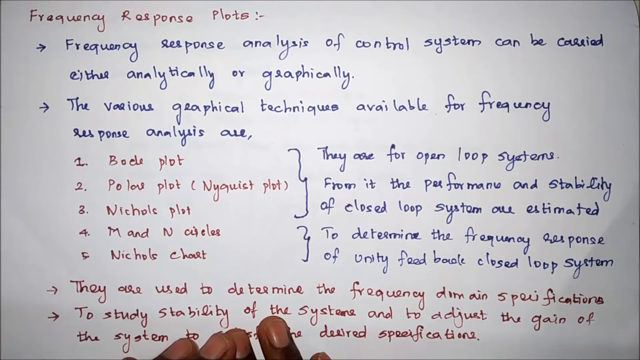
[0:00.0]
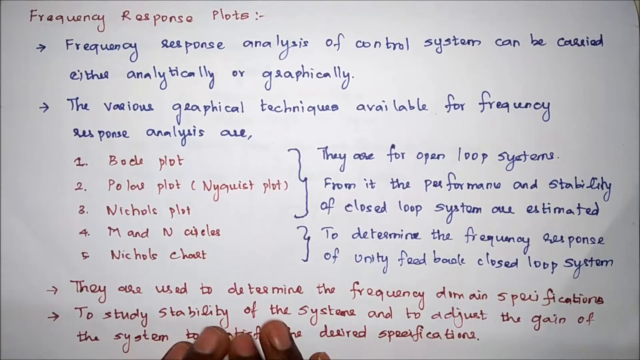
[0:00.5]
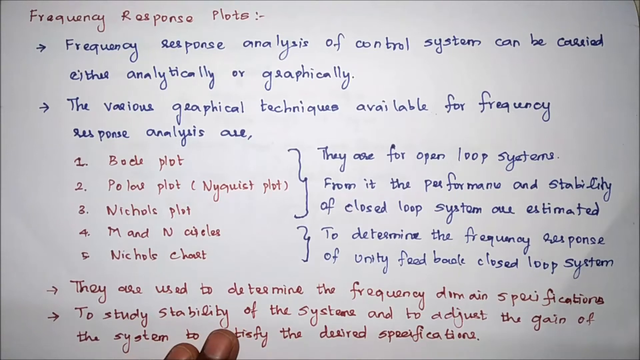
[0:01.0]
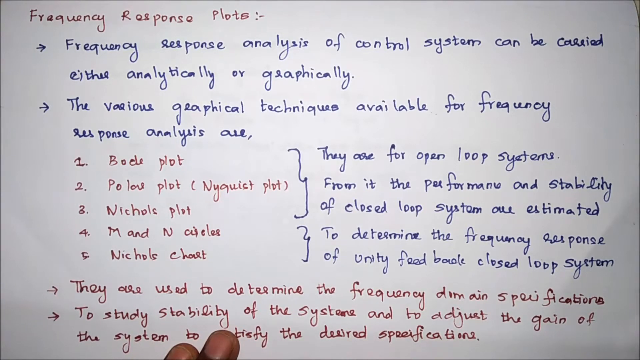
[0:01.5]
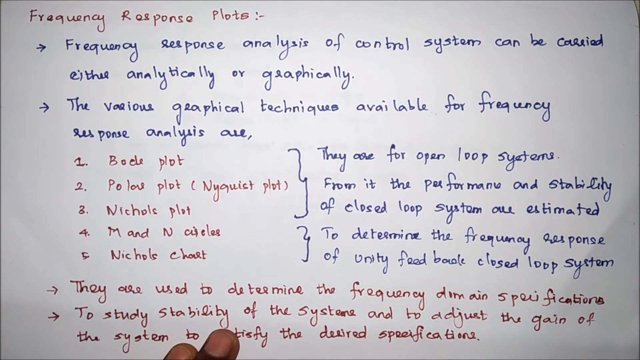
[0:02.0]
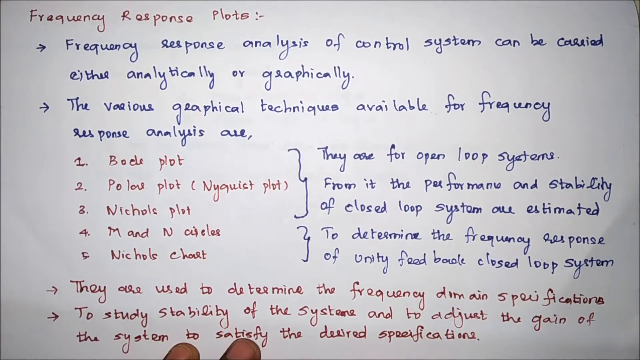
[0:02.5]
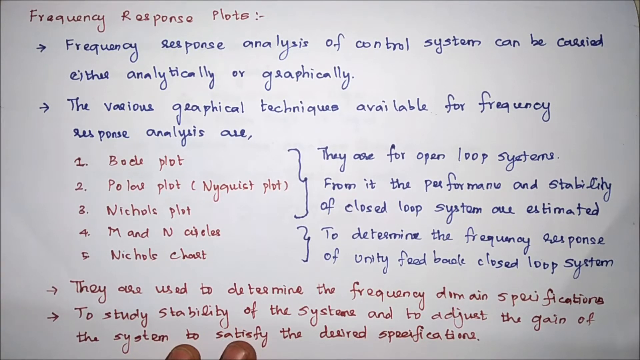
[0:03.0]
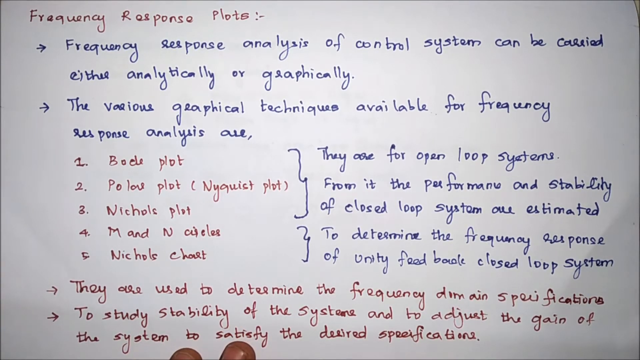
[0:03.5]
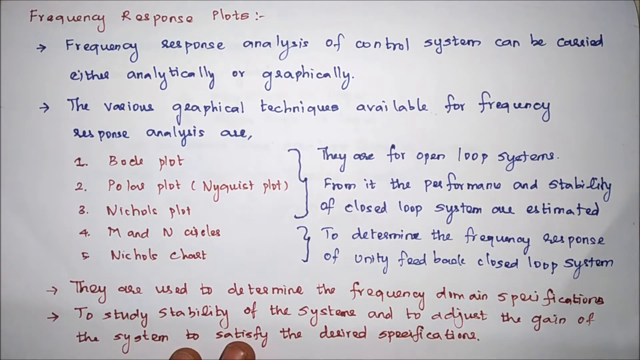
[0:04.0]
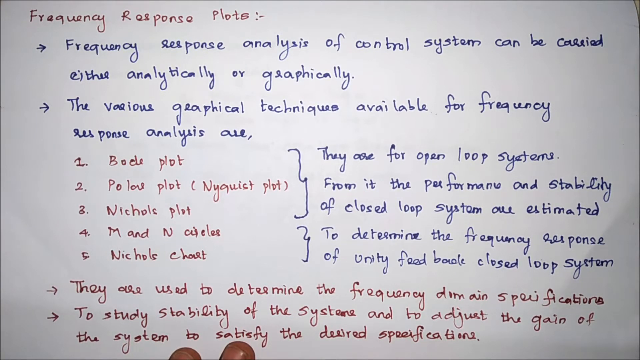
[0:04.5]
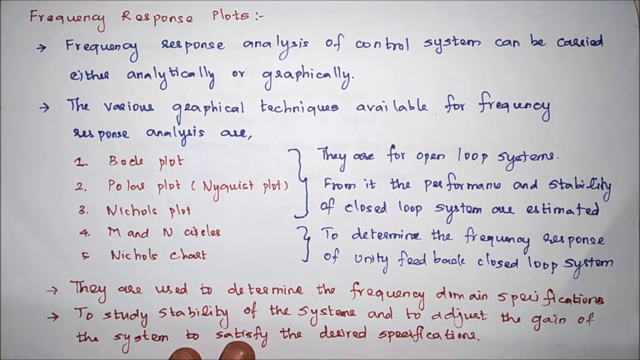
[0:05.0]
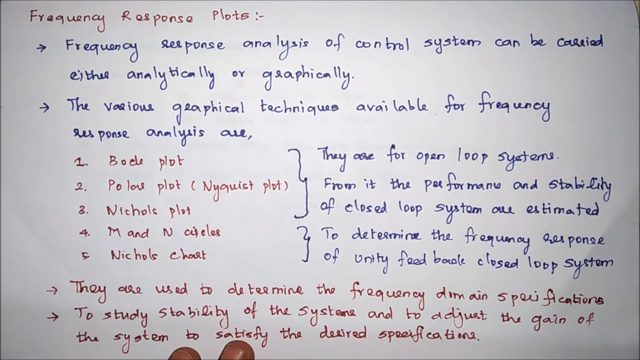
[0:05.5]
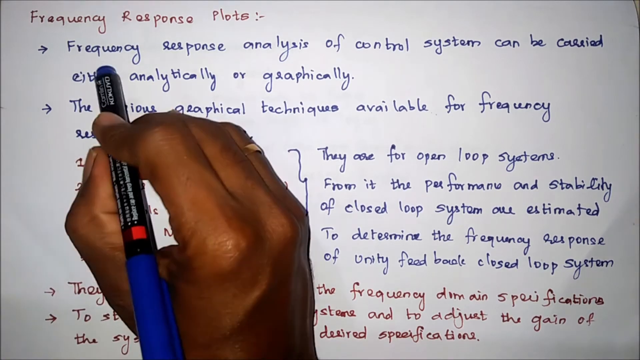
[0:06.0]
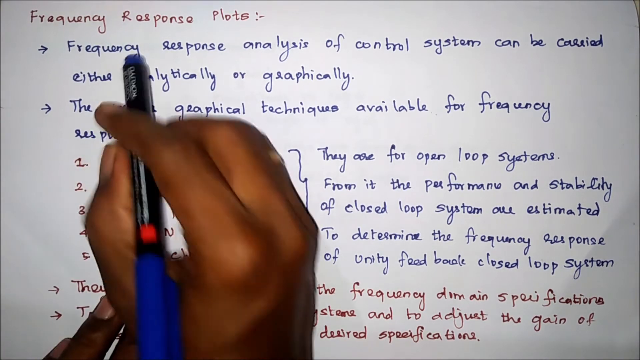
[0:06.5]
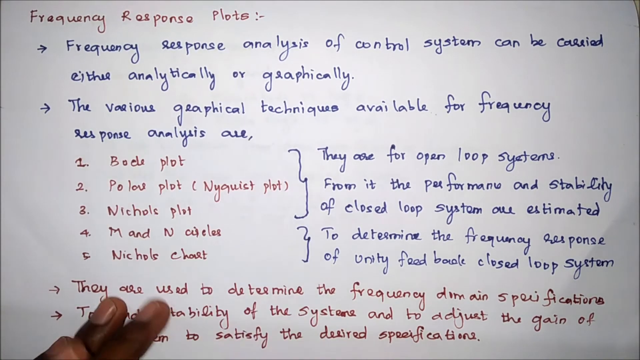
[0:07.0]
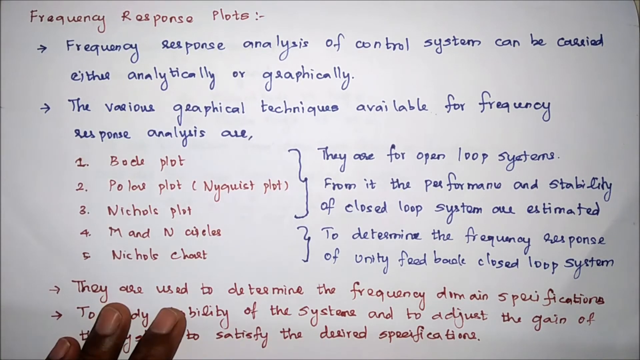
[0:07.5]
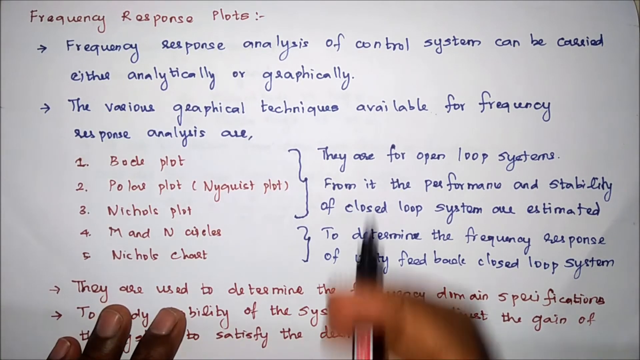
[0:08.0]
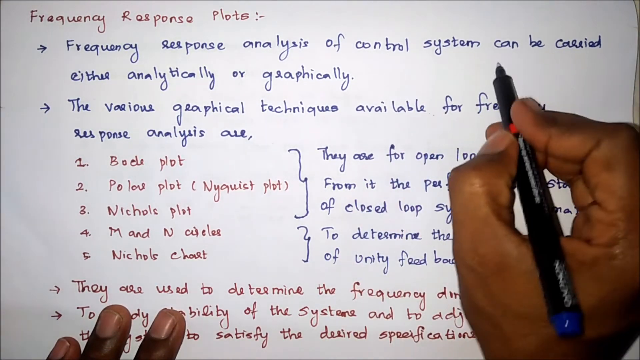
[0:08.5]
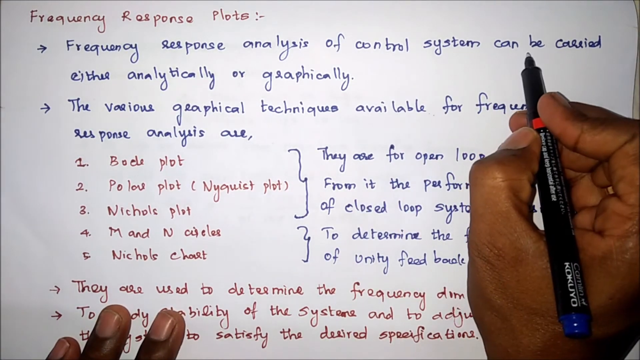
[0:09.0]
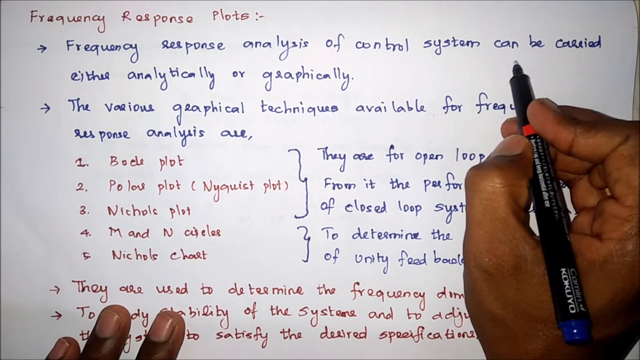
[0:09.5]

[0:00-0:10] A page of writing appears, apparently a tutorial about geography. "Frequency response plots" is written in red, followed by other words, including "frequency response analysis of control systems," written in blue. In red ink, different types of plots are listed, and next to them, in blue writing, is text saying they are for open loop systems. At the bottom there is more red writing saying they are used to determine the frequency, and so on. A hand holding a pen moves through each point.